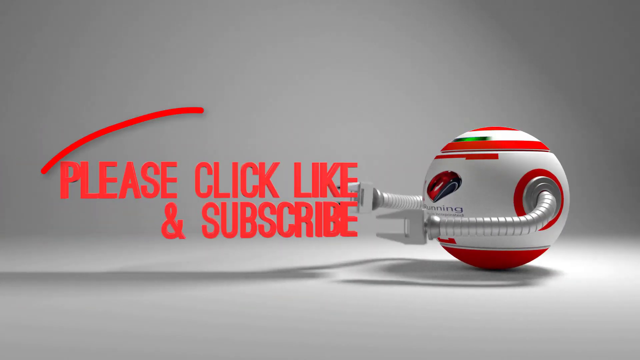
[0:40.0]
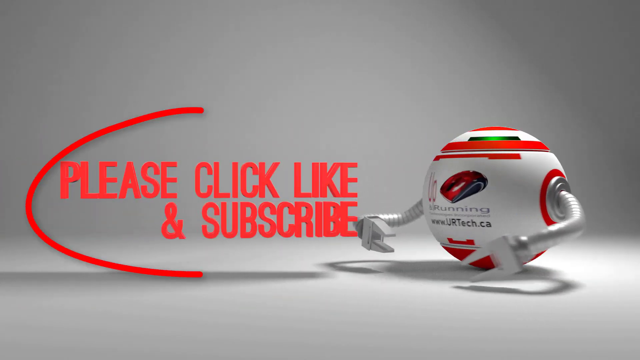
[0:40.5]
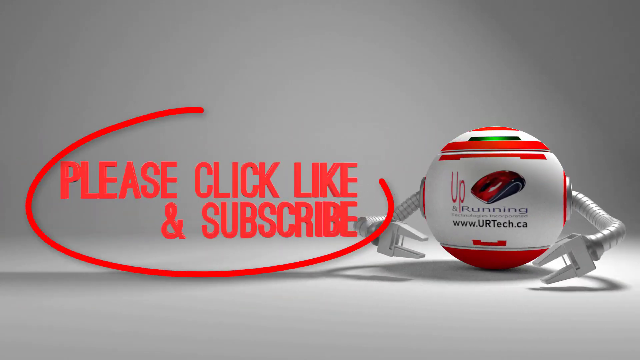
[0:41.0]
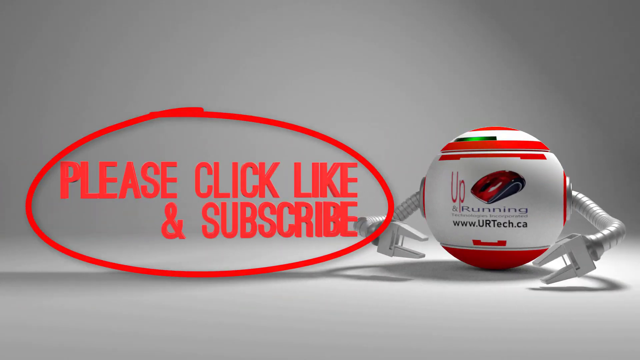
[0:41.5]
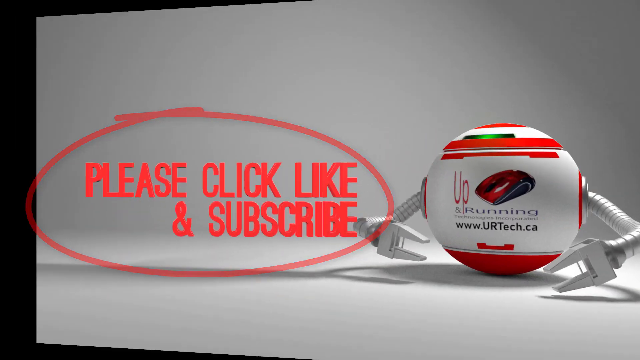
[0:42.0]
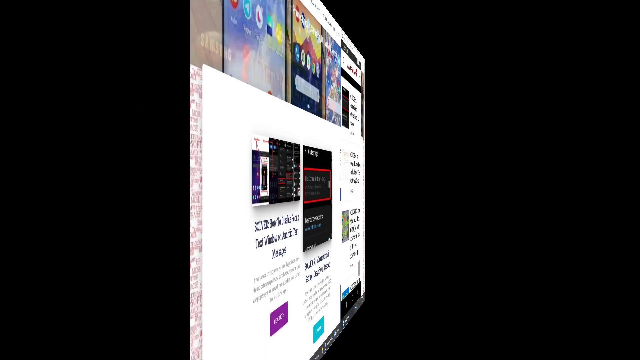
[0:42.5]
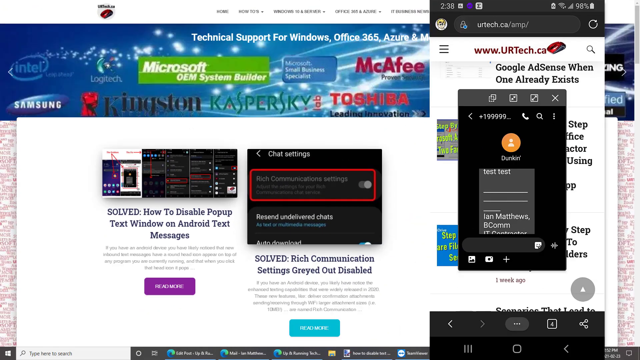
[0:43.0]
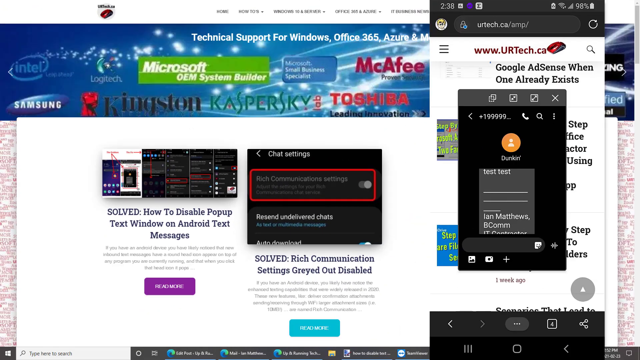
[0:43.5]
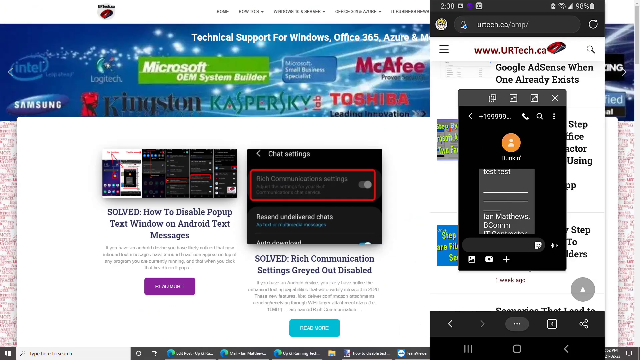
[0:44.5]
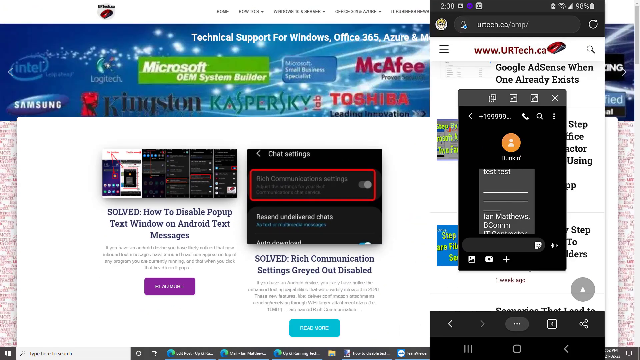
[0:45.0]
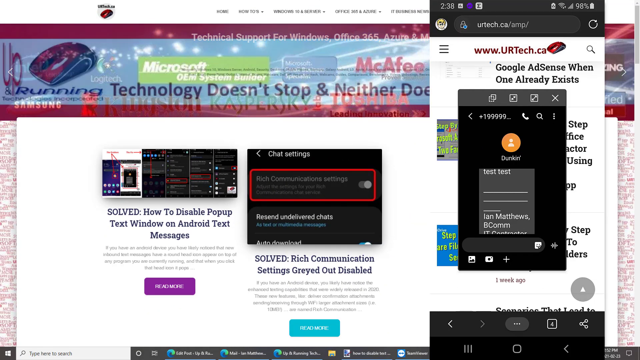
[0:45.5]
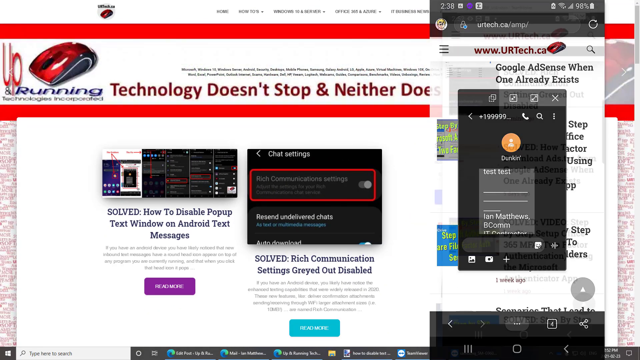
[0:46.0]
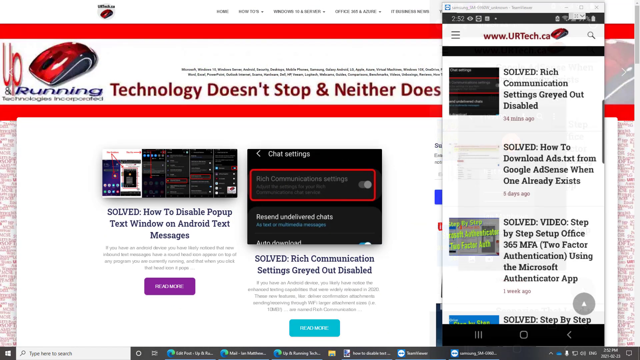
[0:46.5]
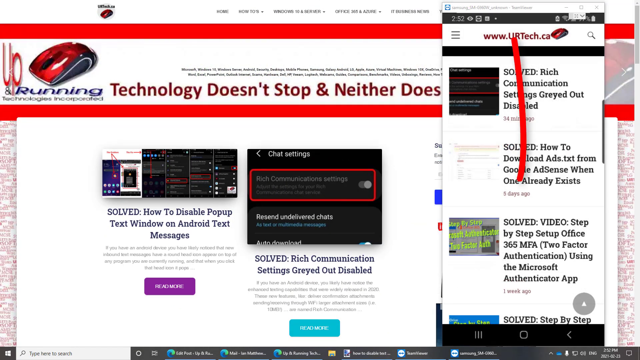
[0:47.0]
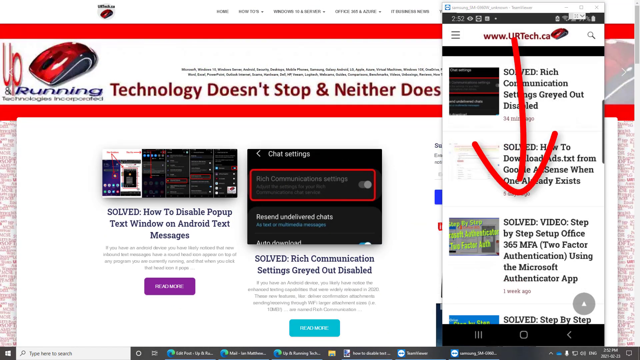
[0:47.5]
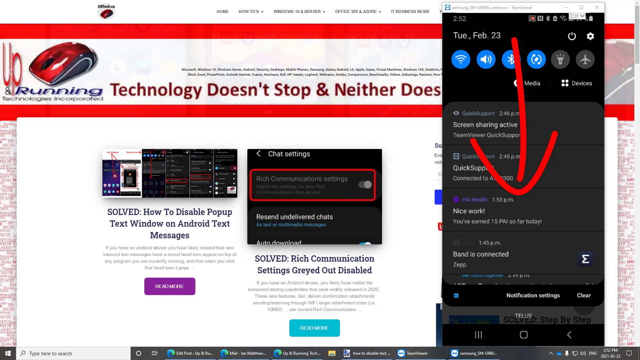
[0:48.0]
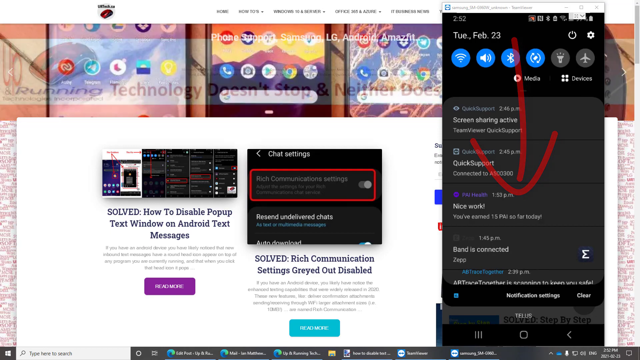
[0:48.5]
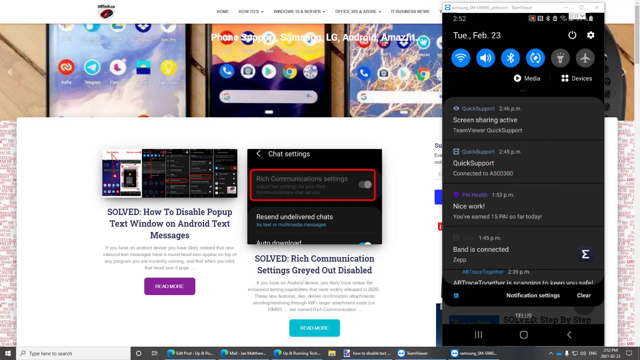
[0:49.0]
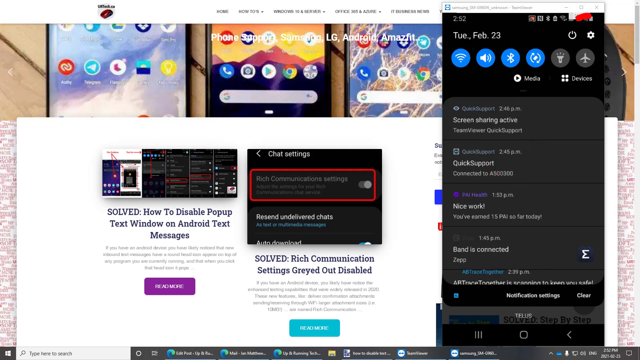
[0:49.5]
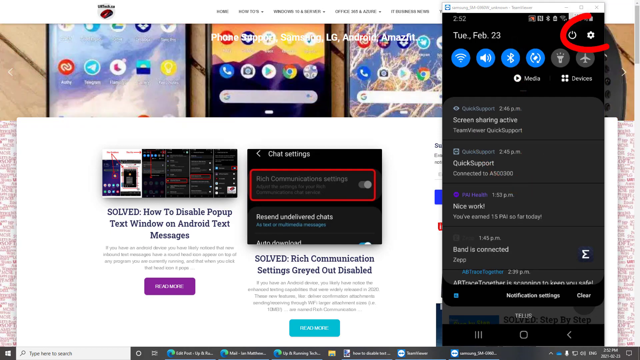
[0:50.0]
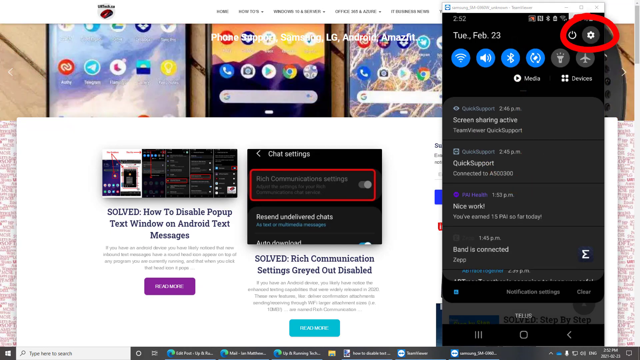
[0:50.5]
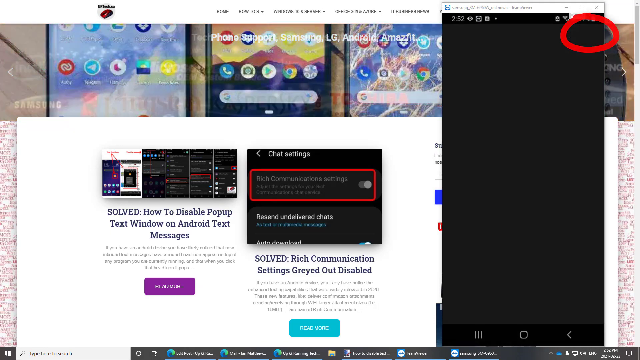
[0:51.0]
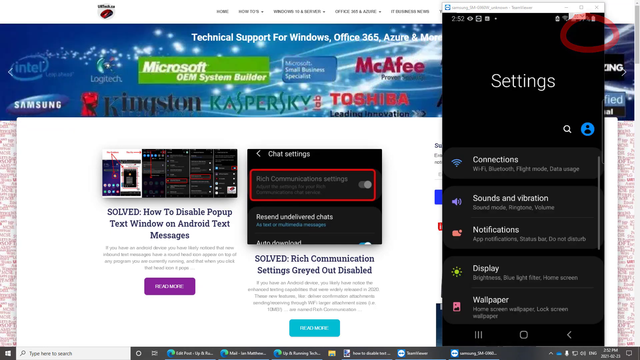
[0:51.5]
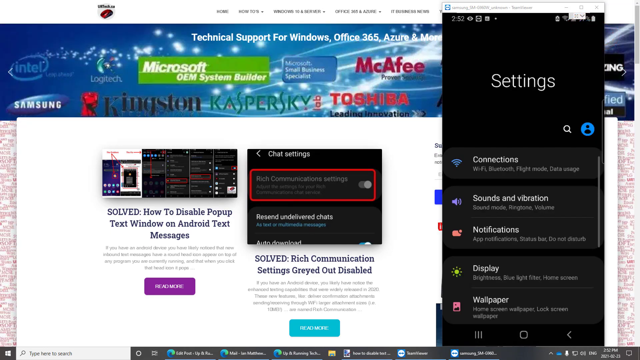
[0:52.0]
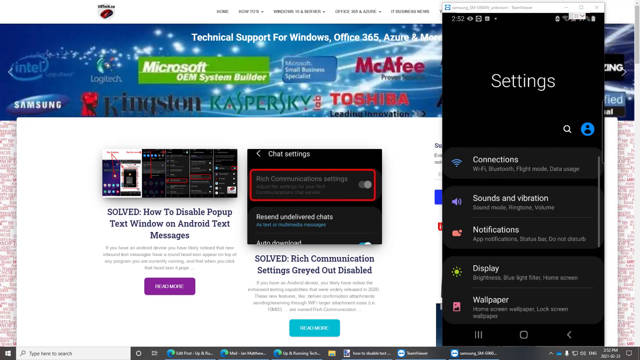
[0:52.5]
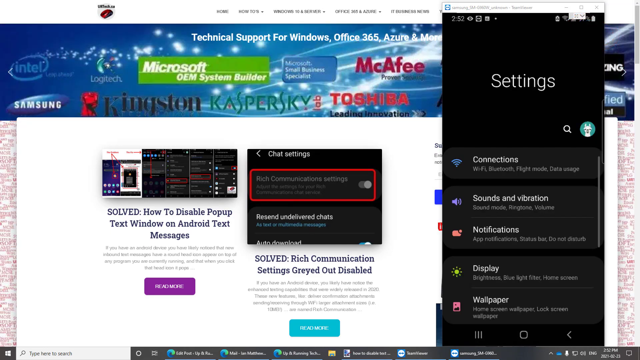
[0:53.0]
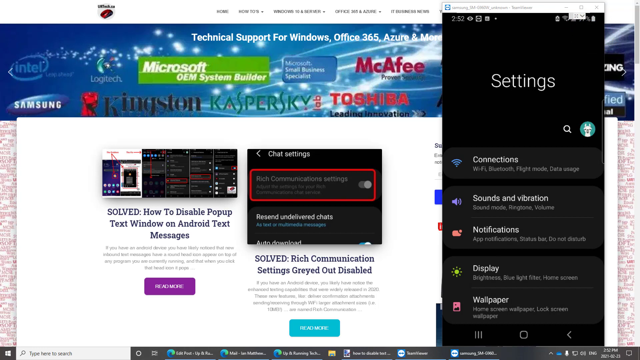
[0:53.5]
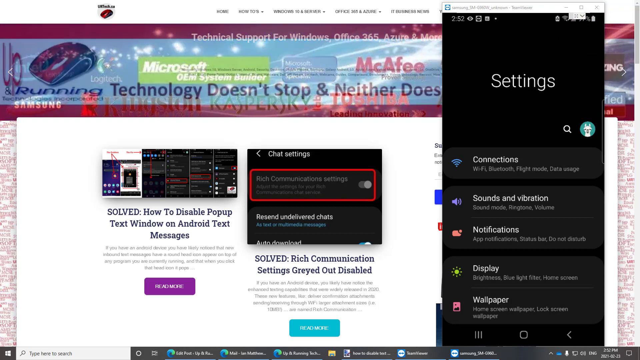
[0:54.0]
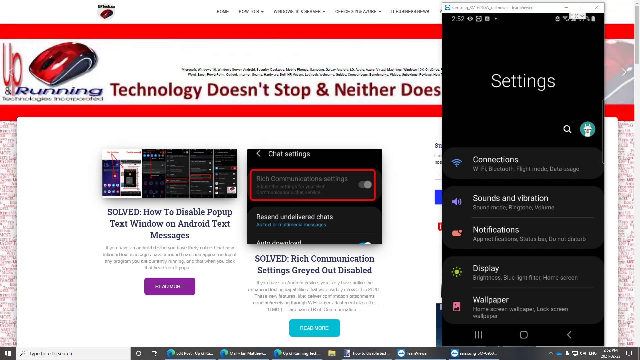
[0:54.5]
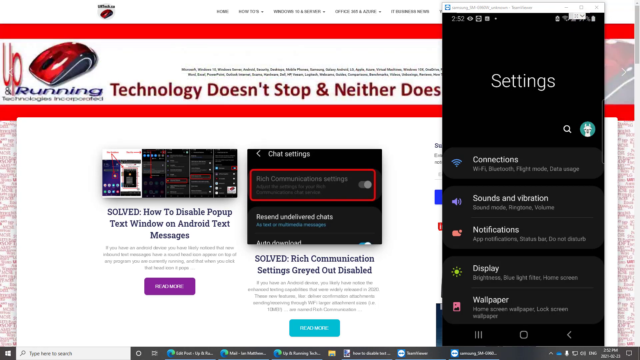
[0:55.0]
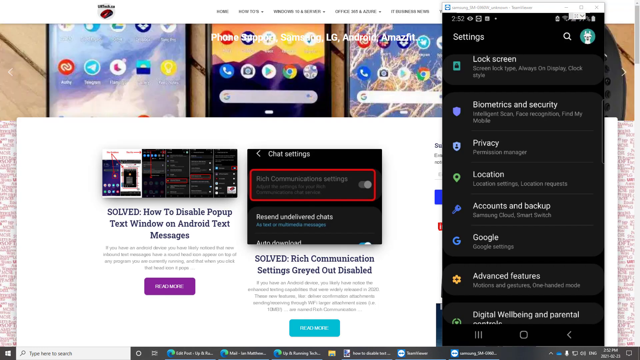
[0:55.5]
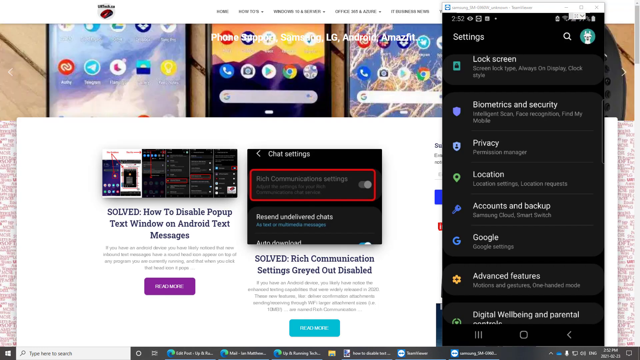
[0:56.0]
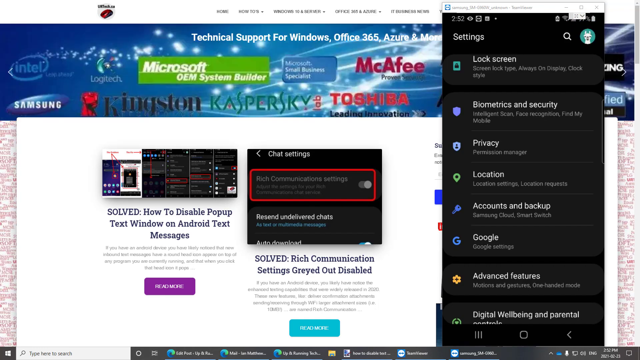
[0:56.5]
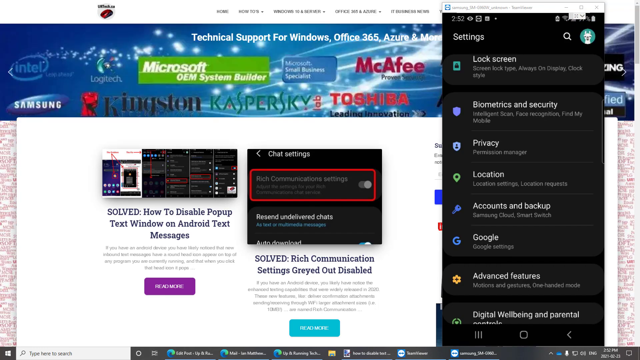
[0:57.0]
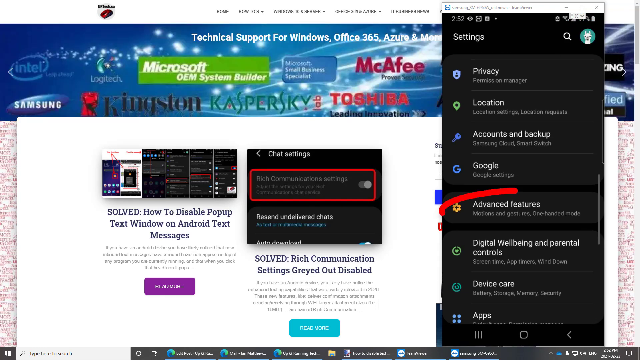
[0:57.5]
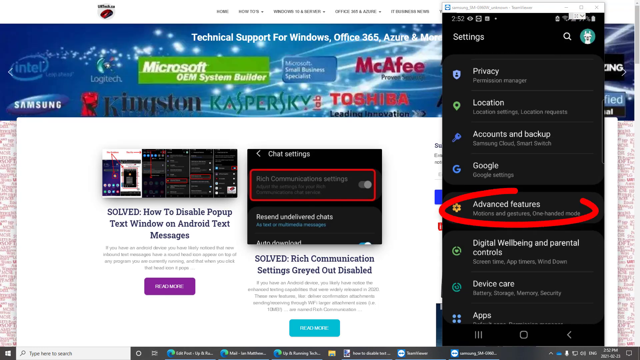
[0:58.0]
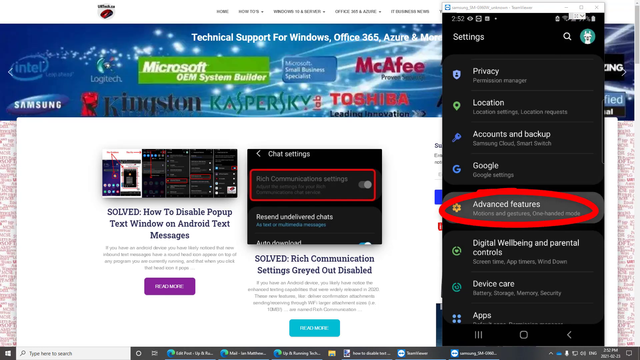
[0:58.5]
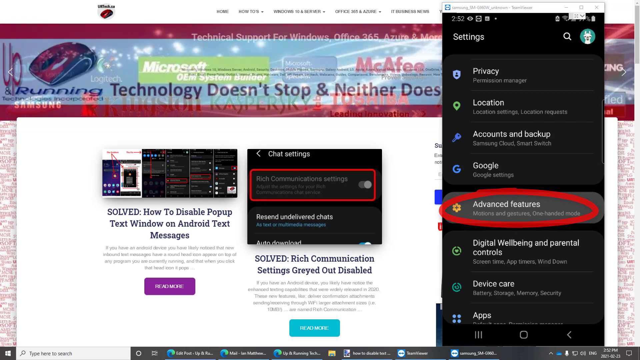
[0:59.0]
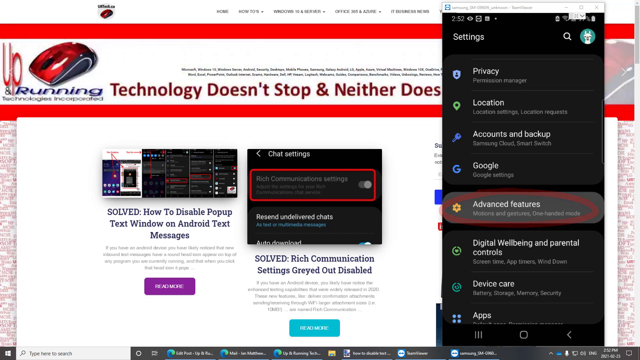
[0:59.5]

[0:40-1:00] The video shows someone making an IT how-to video involving a desktop and a smartphone. A screen share of a Windows 10 desktop is overlaid with a screen share of a Samsung Android smartphone. The desktop has a website called urtech.ca pulled up, with several ads for the company, apparently some sort of IT company. The focus is on the Samsung smartphone pulled over on the right of the screen, with arrows pointing the viewer to its advanced settings. This may relate to the article in the middle of the site, titled "Solved: Rich Communication Settings Grayed Out. Disabled." The video appears to be showing a user how to enable these settings when they are grayed out and unusable. Toward the end, the video becomes a little pixelated.